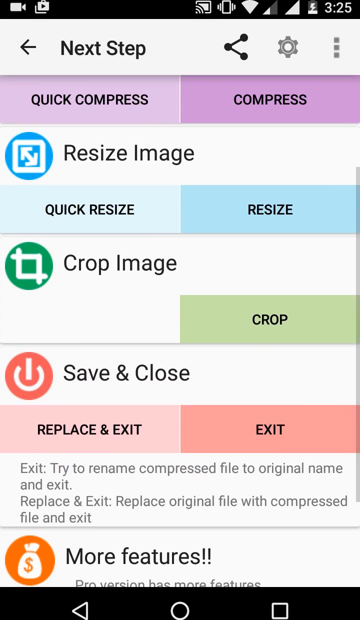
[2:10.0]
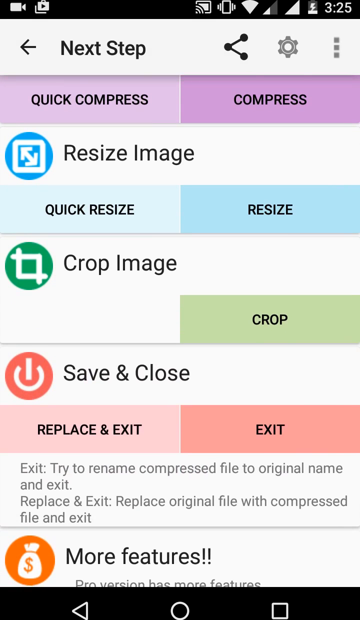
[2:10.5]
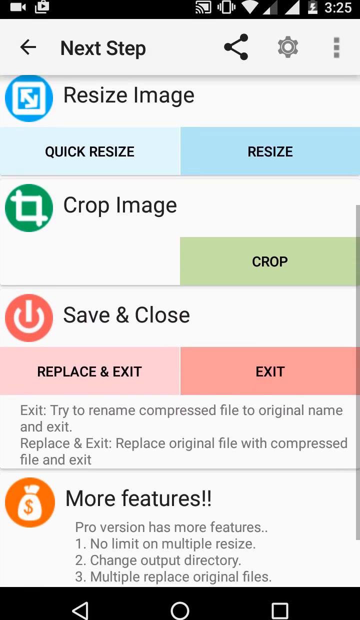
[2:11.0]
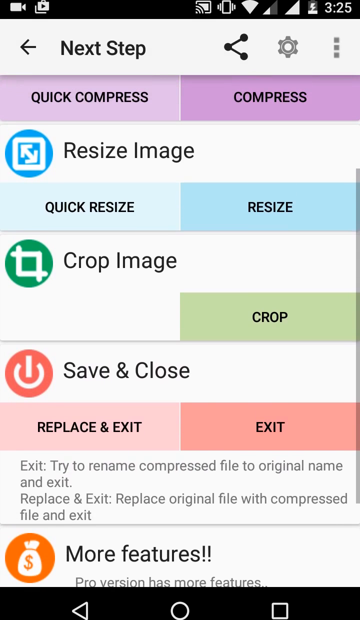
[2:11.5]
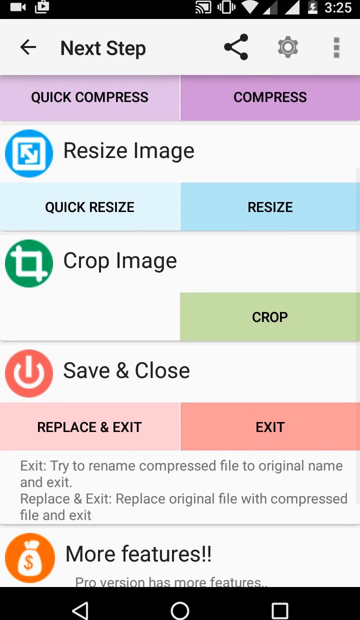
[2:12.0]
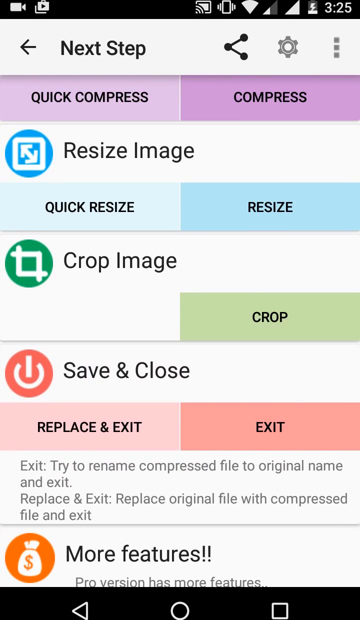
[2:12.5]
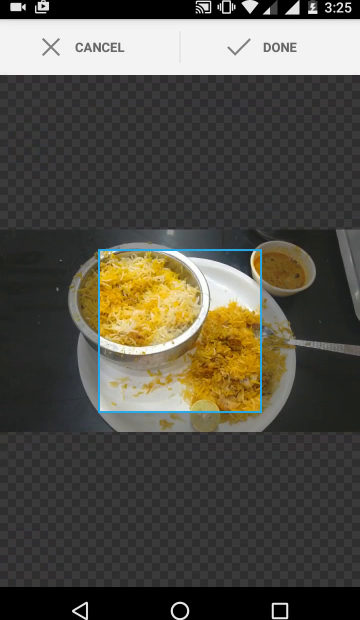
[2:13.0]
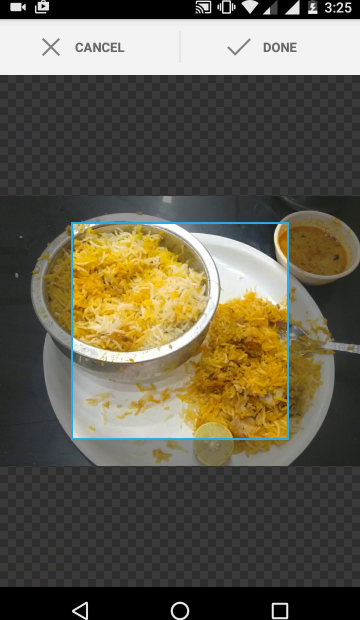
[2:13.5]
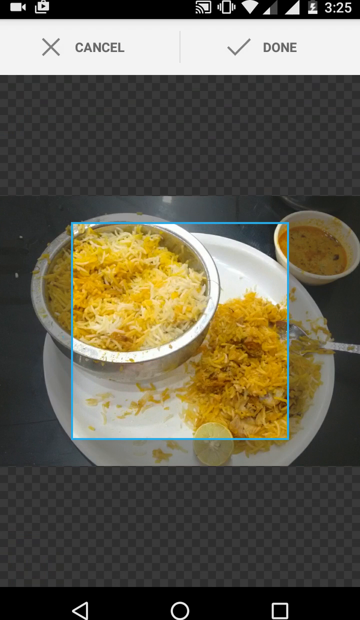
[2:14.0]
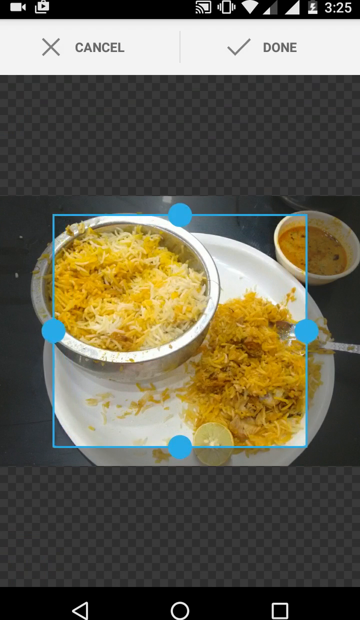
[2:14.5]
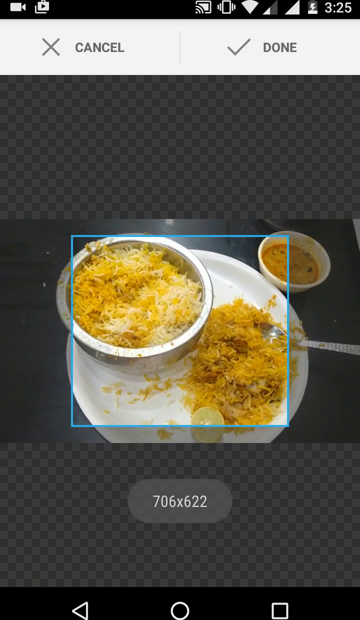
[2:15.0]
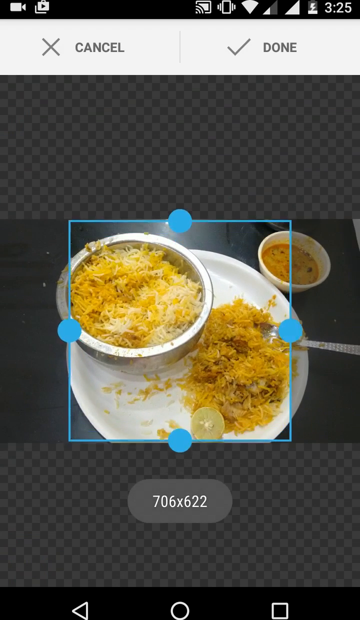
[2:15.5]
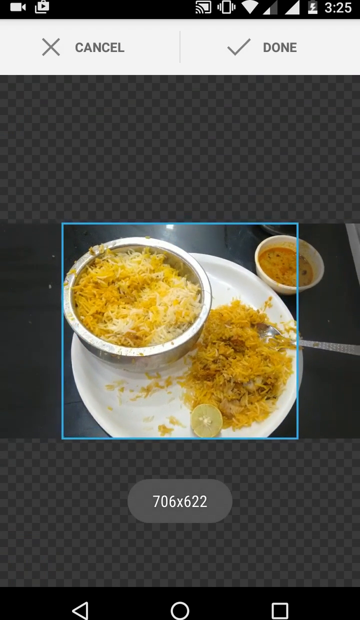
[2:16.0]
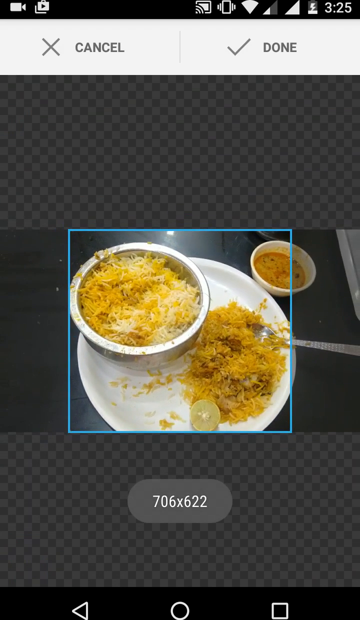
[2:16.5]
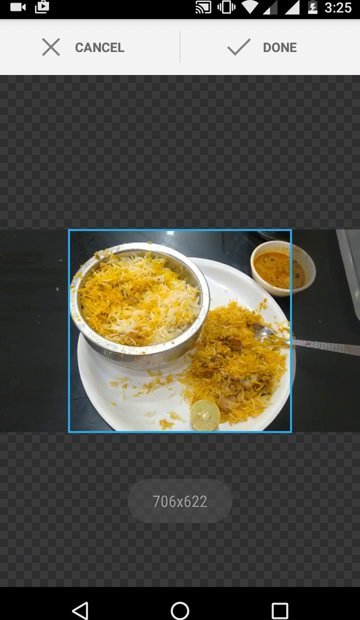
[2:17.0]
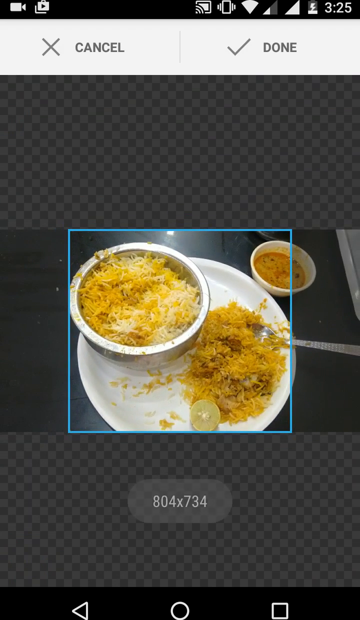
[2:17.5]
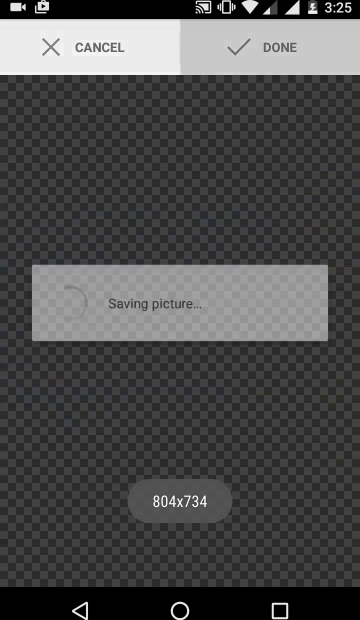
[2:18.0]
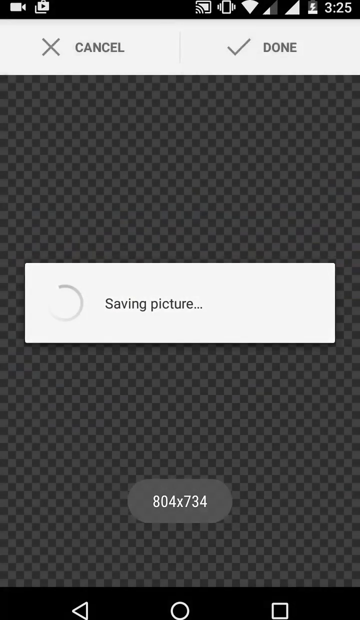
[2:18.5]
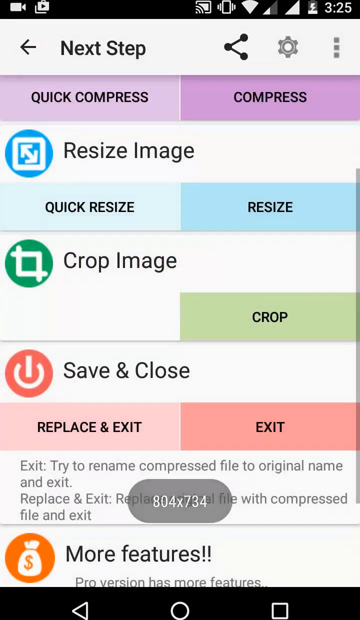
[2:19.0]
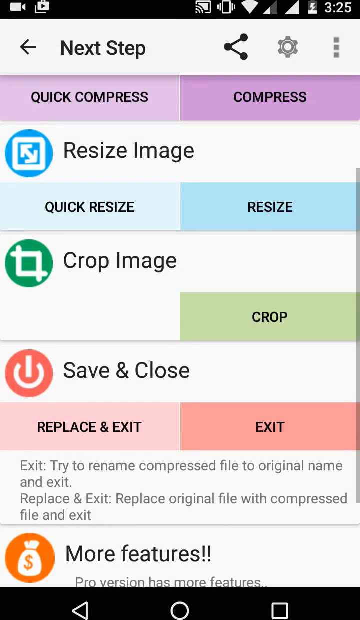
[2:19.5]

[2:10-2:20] The Photo Compress app shows how to resize: a box shows the chosen size, and the picture must fit inside the box, which is resized repeatedly until it is the desired size. The picture is then saved with save and close. Other options are shown, including replace and exit, with descriptions reading "try to rename compressed file to original name and exit" and "replace original file with compressed file and exit". More features of the app are shown.